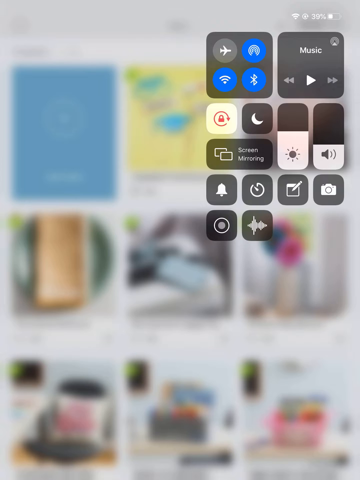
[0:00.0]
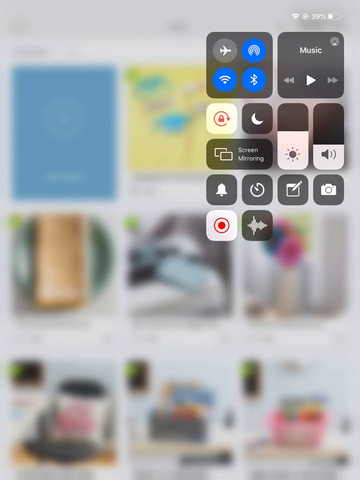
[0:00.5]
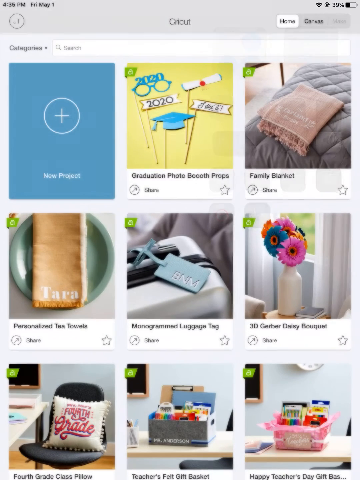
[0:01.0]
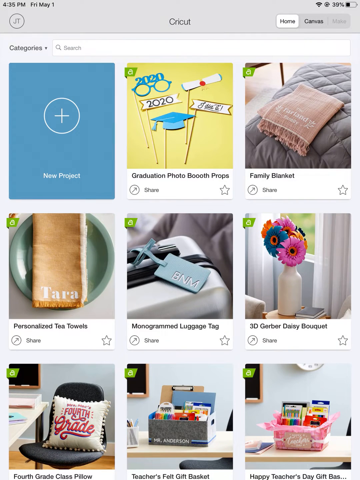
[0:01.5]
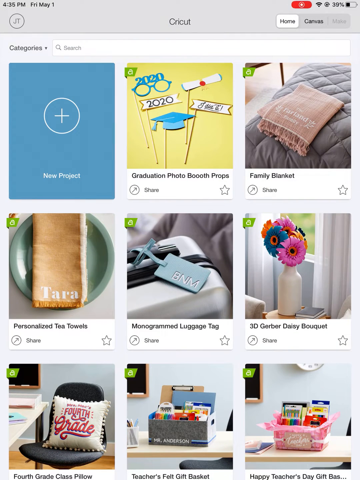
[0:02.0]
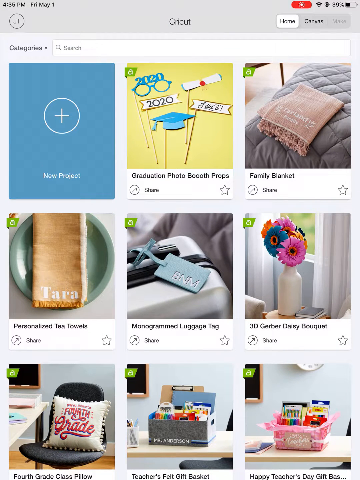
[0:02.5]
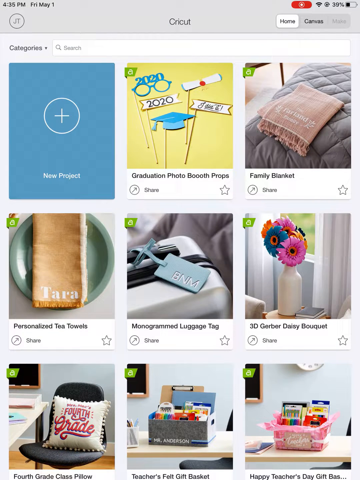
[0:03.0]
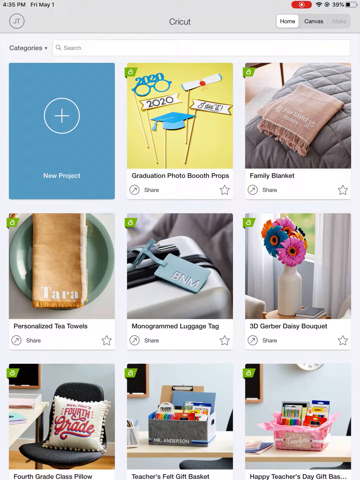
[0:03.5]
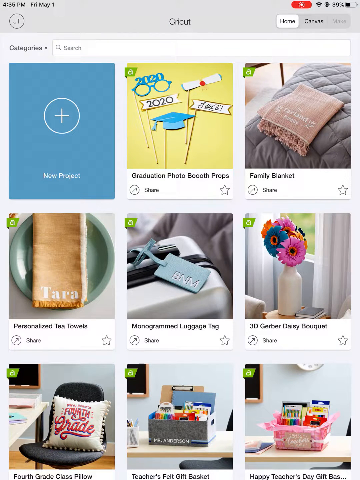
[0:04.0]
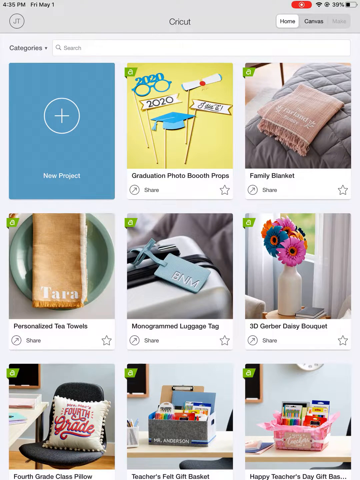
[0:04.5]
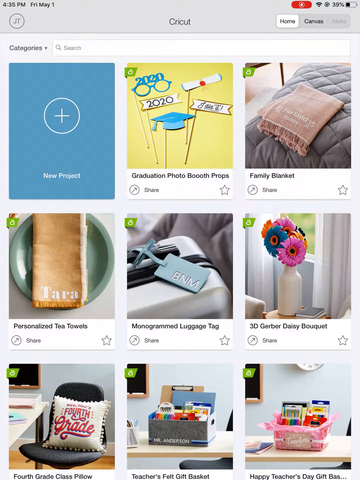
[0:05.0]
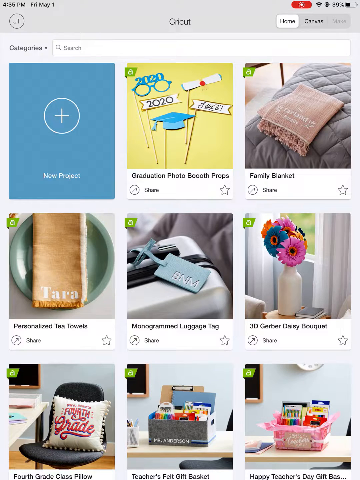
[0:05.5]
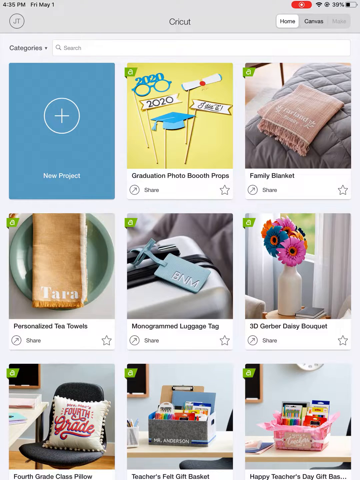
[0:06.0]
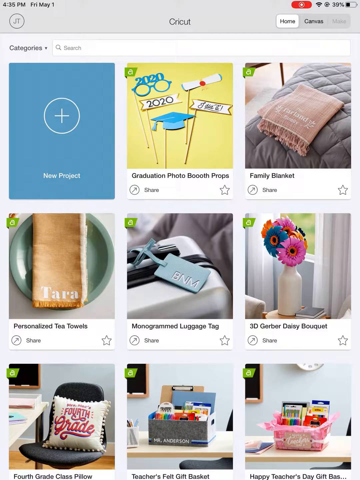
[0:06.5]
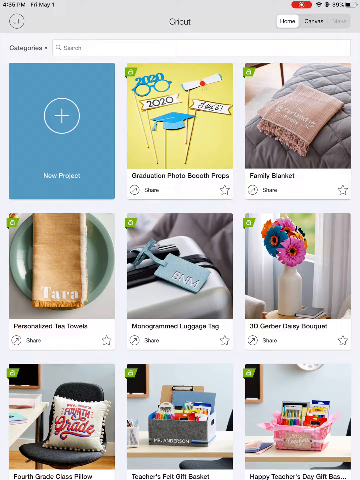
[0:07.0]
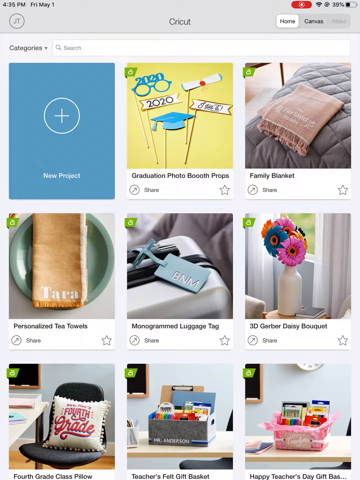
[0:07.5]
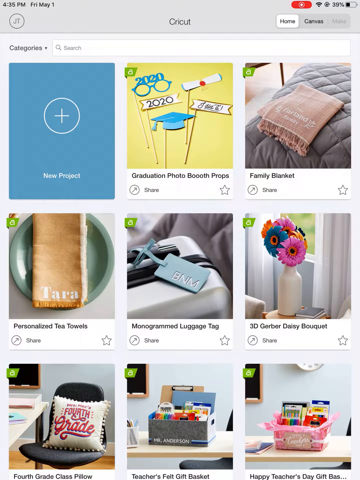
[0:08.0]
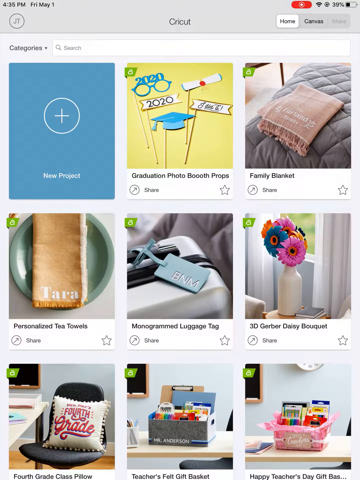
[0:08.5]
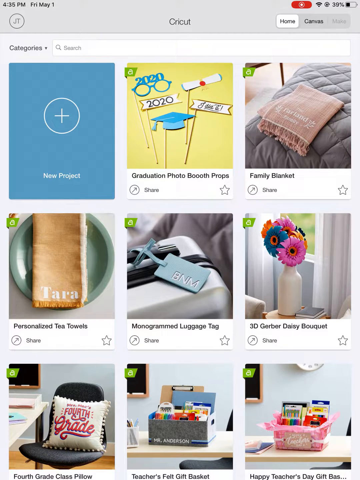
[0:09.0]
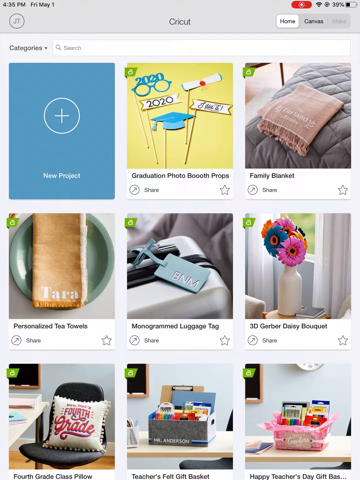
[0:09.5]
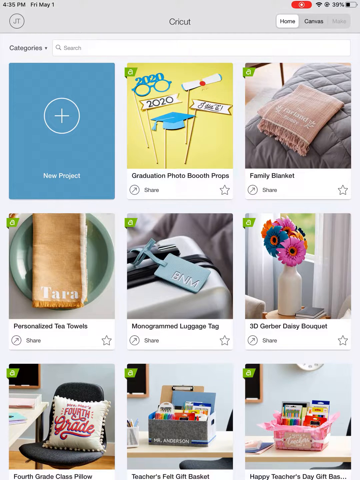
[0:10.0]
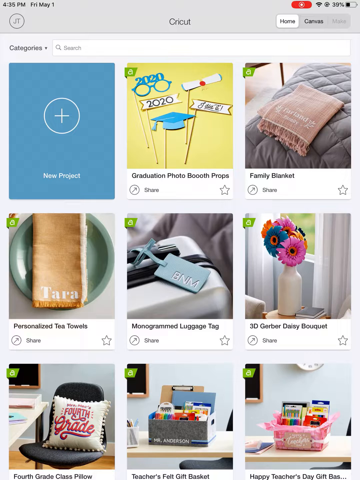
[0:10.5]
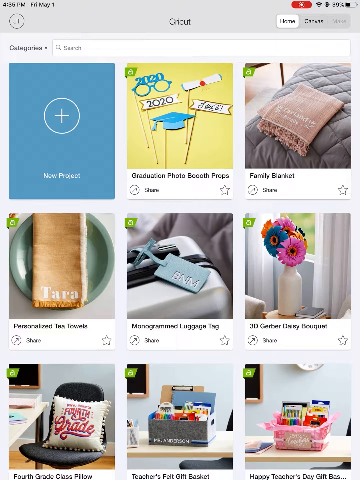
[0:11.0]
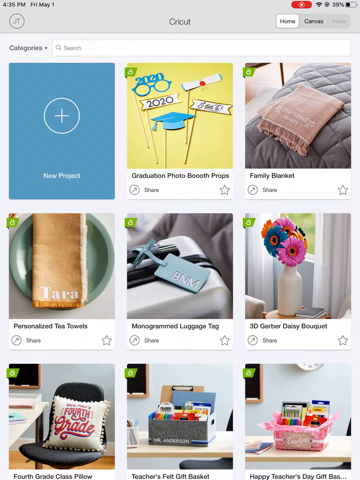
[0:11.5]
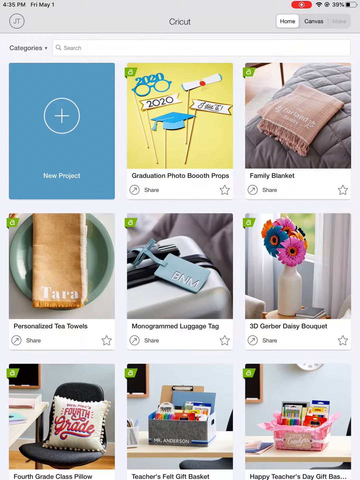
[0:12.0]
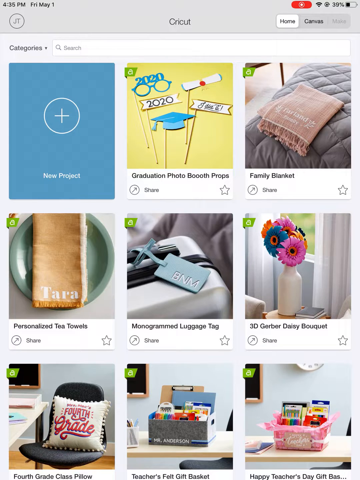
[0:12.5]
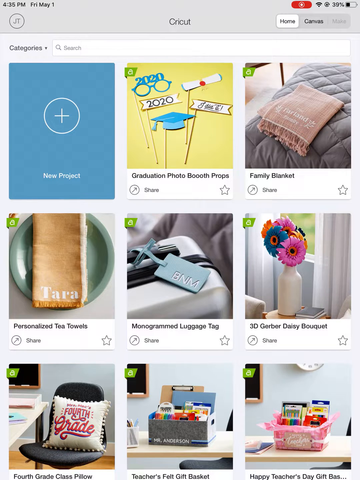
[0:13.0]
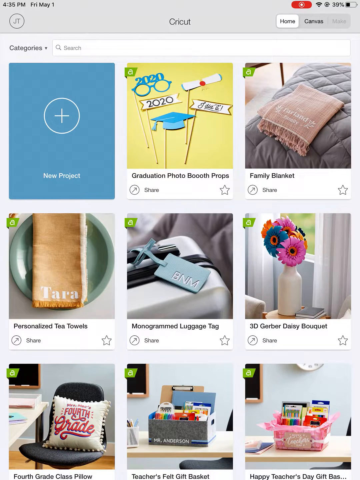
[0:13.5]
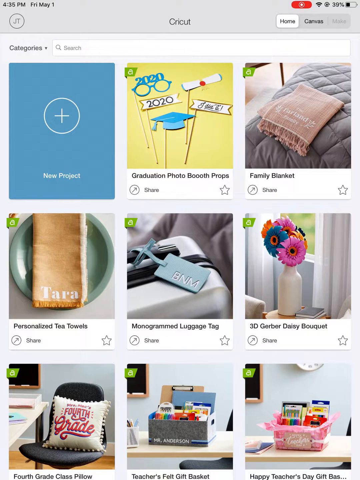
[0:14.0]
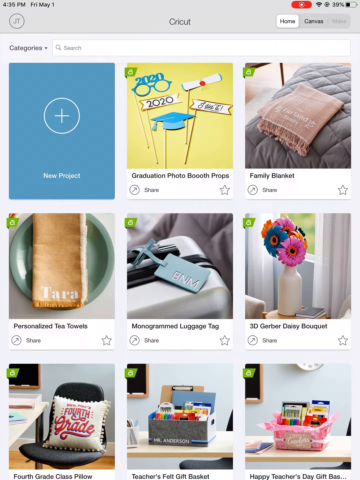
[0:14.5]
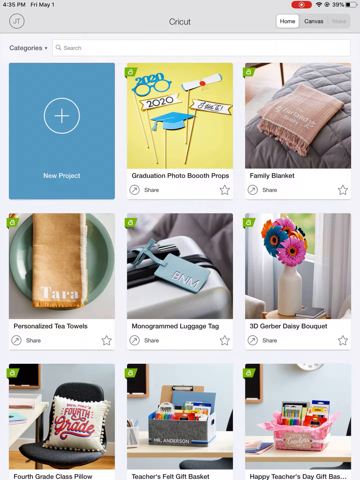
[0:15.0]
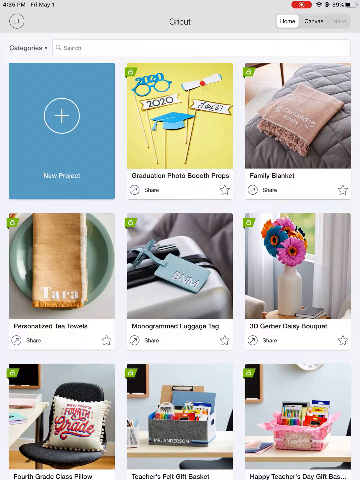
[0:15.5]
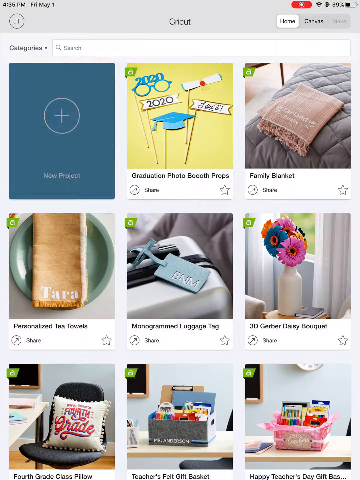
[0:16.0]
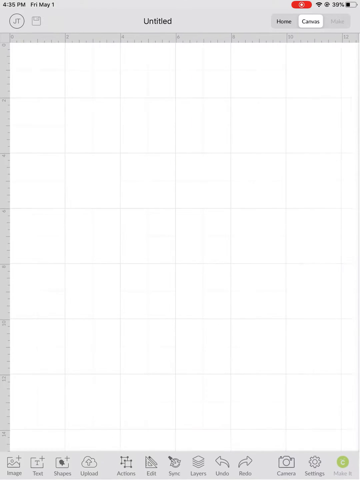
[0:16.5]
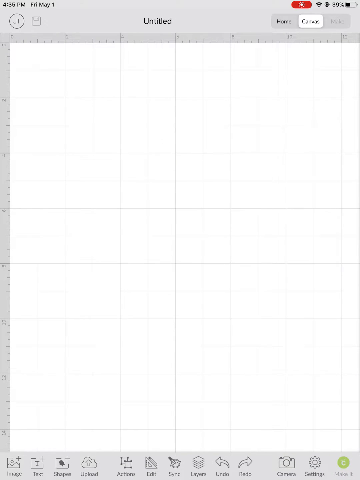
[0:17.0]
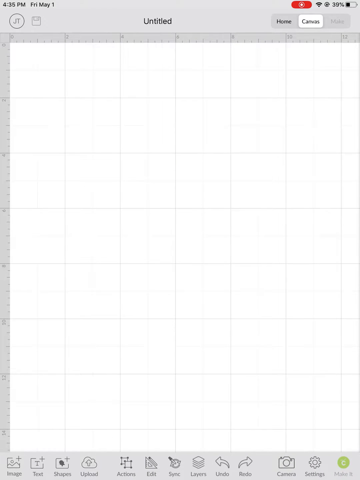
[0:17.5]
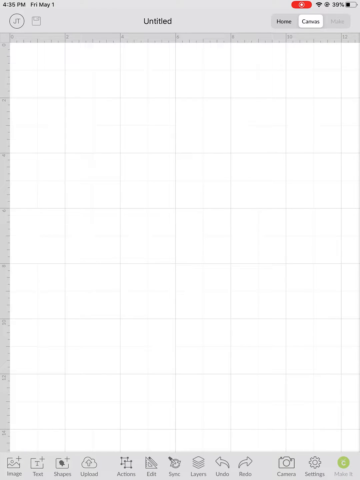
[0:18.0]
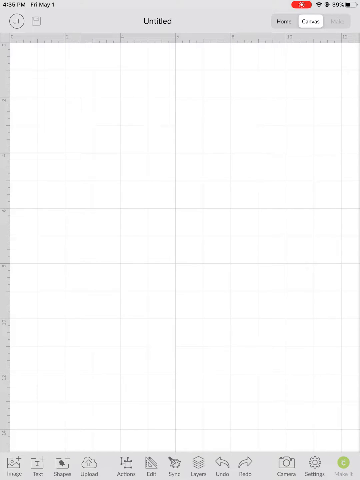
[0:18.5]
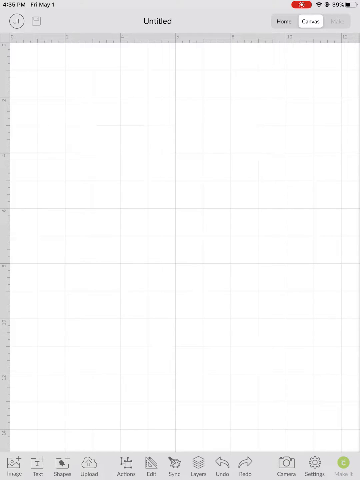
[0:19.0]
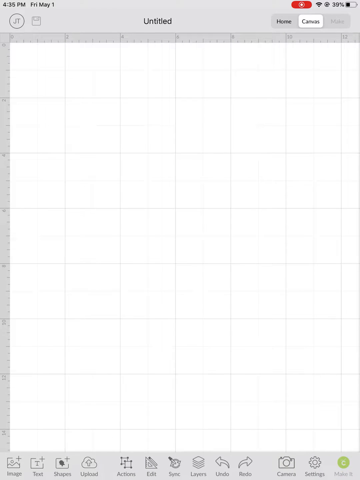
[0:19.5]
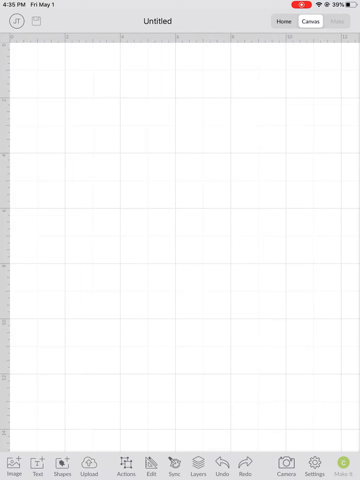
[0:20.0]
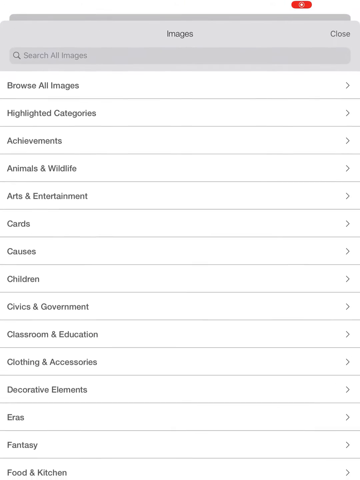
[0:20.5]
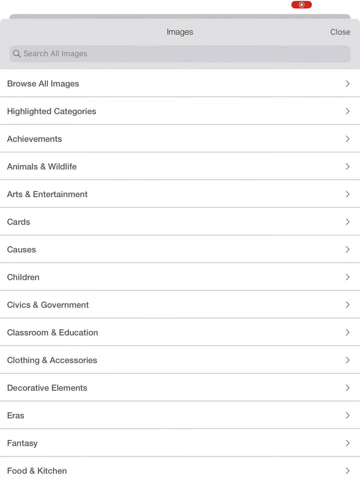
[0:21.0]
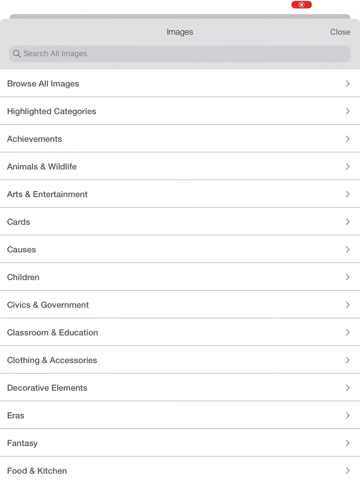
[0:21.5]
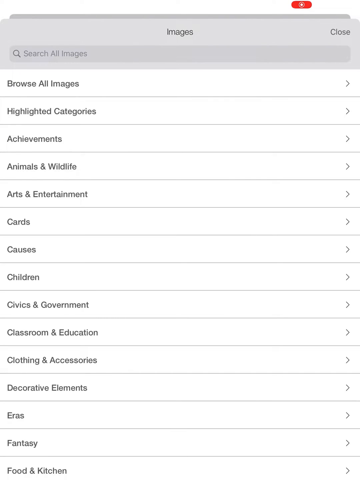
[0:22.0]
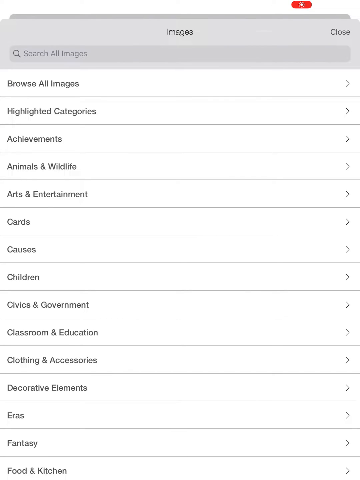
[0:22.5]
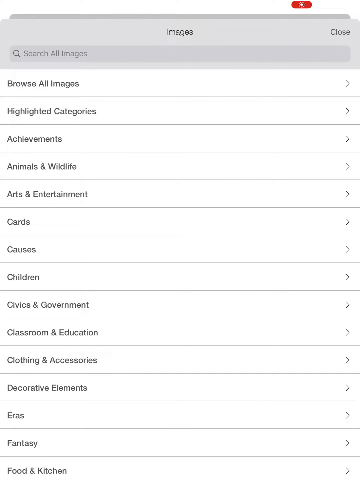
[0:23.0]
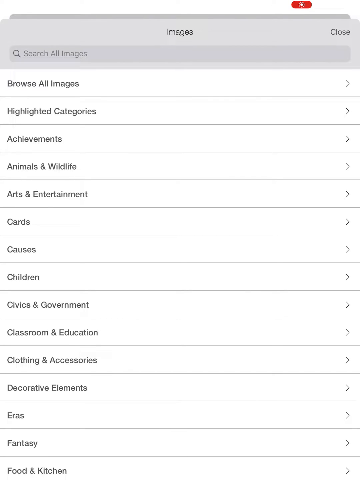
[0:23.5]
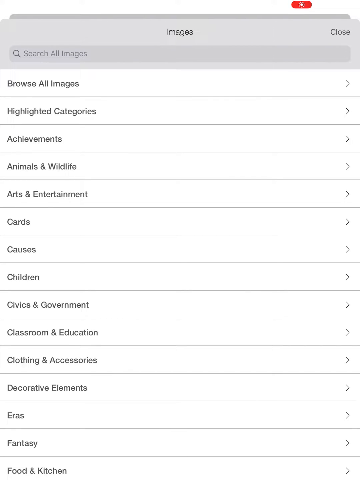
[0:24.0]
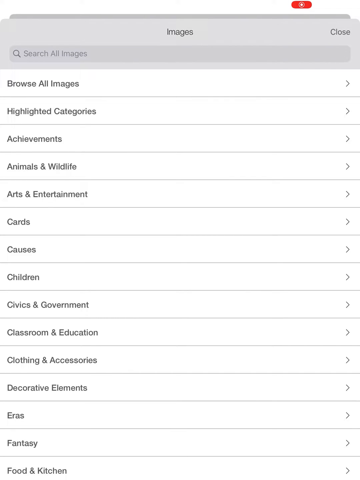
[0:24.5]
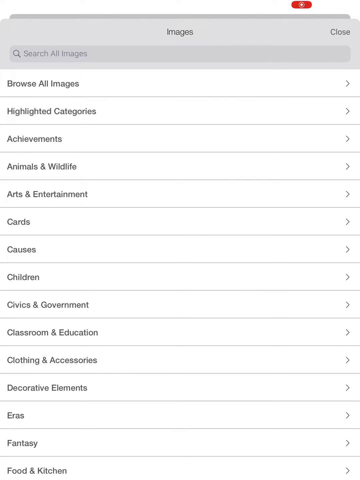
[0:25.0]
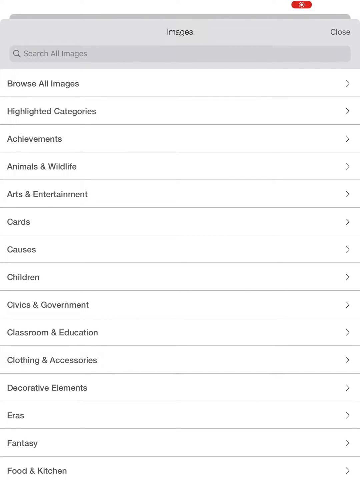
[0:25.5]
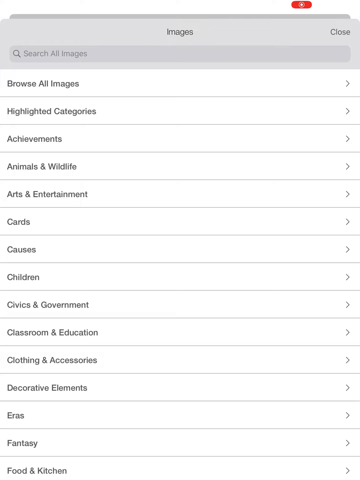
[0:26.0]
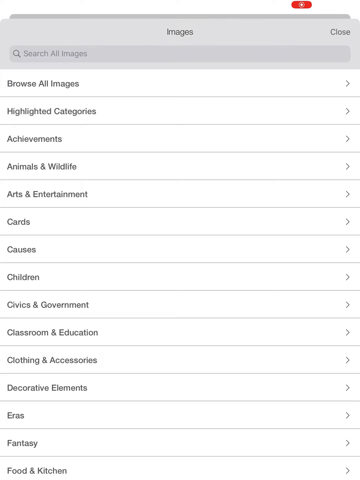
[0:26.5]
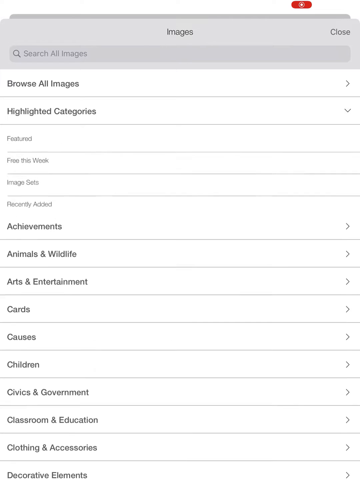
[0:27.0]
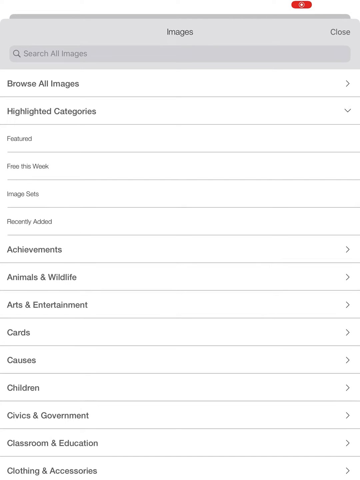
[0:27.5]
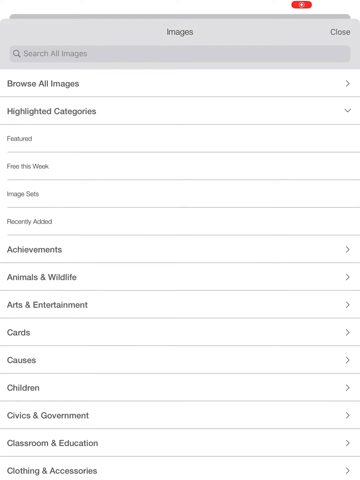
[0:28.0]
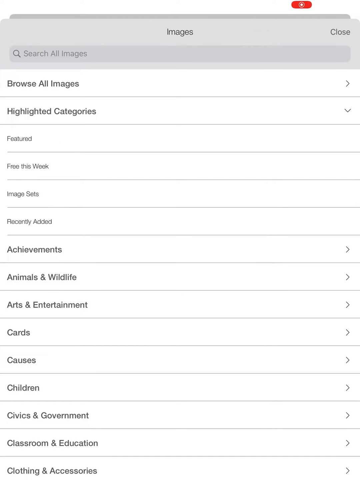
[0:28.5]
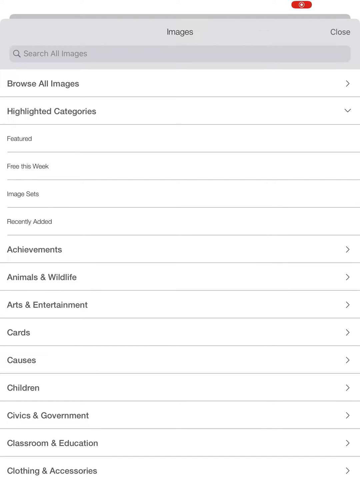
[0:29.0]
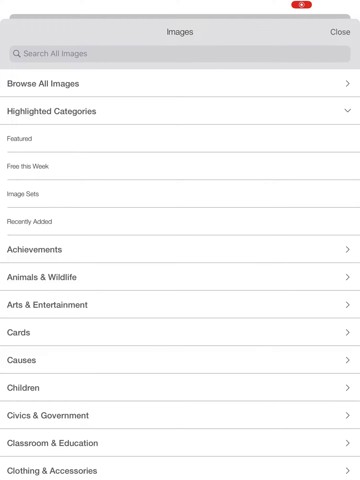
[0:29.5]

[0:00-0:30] The screen of a mobile device displays nine images arranged in three rows and three columns. Starting from the first row and going left to right, they are new project, graduation booth photo props, family blankets, personalized tea towels, monograms, and so on. This view stays on screen for a while. The first one, new project, is then selected, which opens a grid of blank squares with "untitled" written above it. Next, some options pop up under the title "images"; from top to bottom they include browse all images, highlights, arts and entertainment, wild crafts, and several other image options. These remain on the screen until the end of the segment.